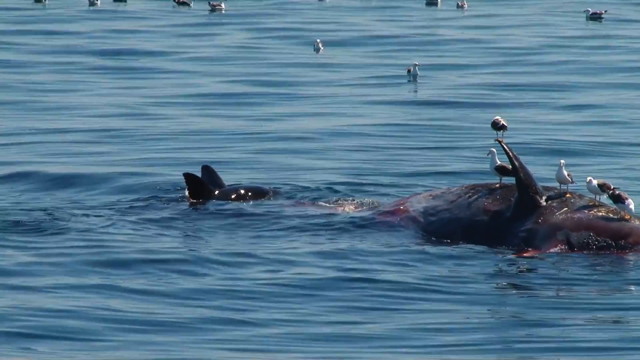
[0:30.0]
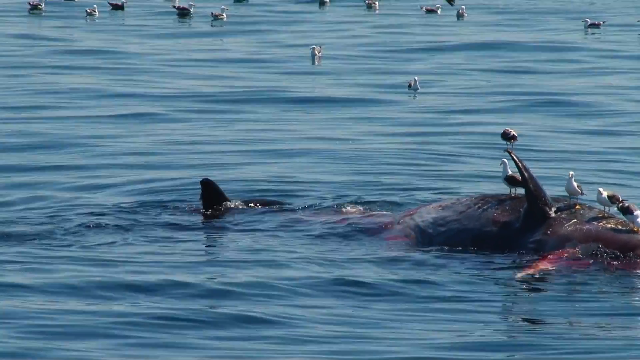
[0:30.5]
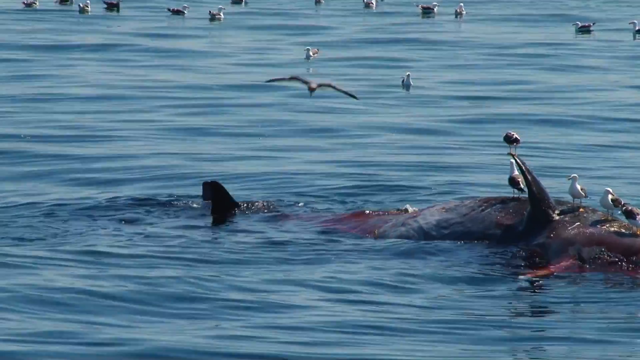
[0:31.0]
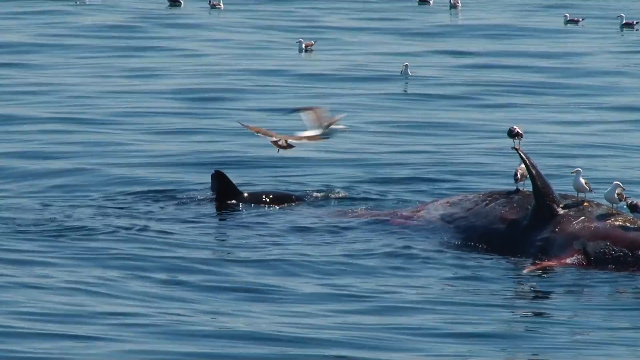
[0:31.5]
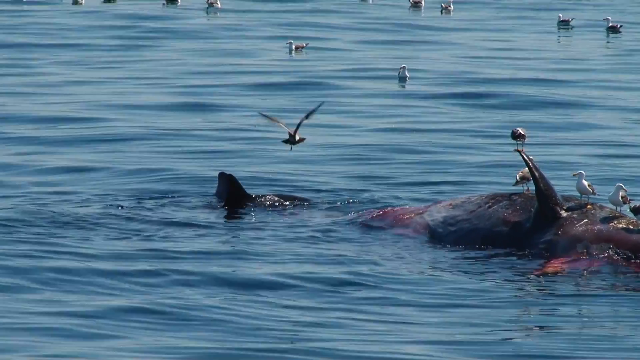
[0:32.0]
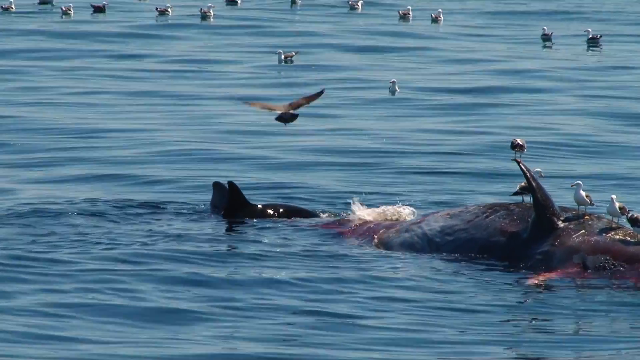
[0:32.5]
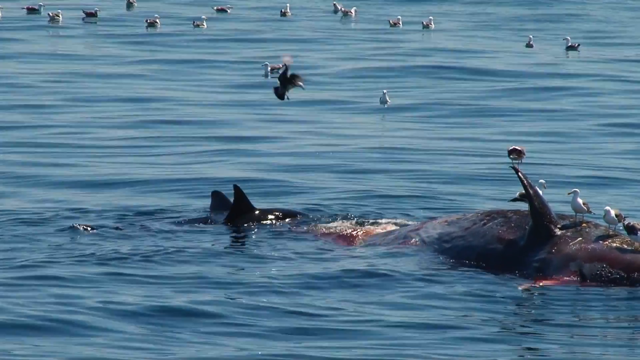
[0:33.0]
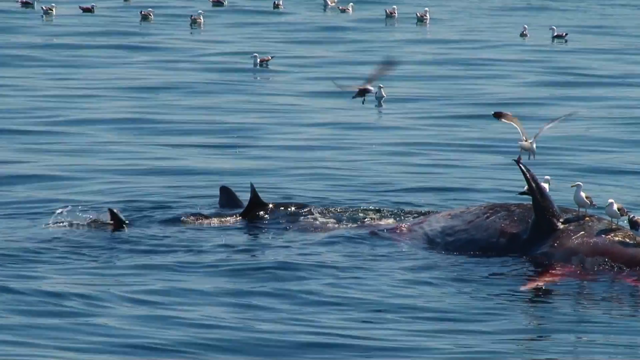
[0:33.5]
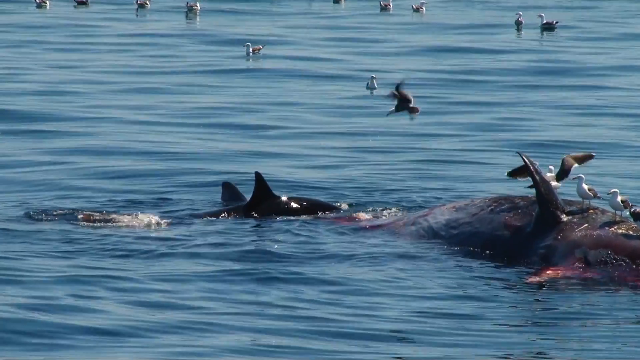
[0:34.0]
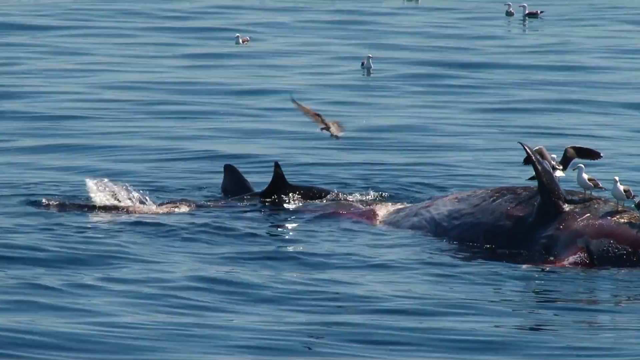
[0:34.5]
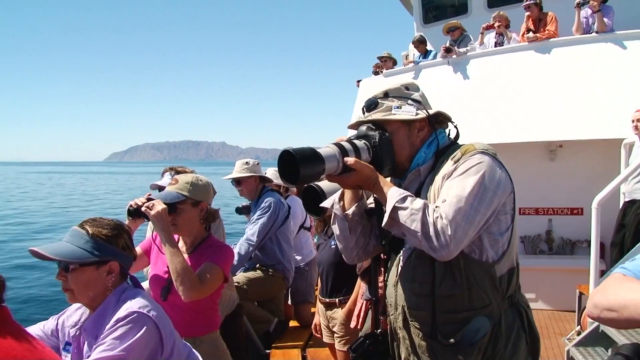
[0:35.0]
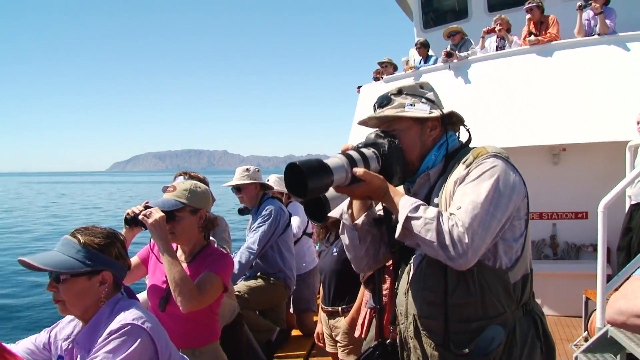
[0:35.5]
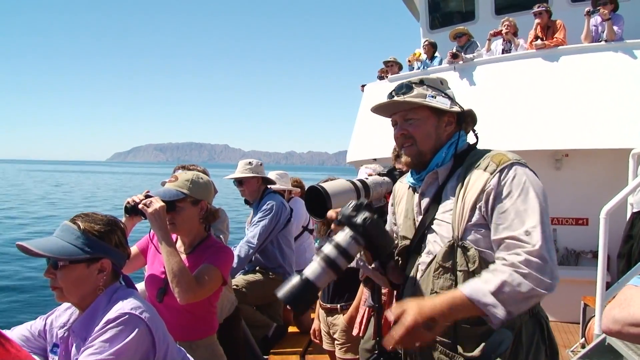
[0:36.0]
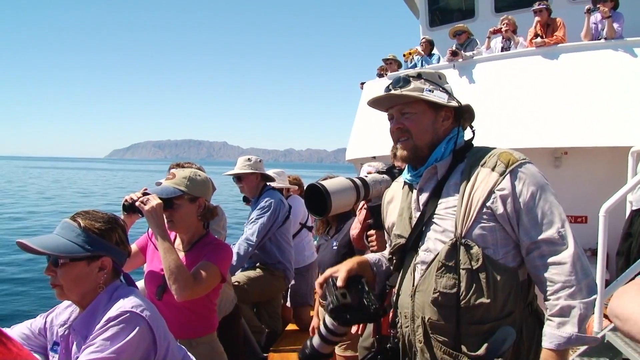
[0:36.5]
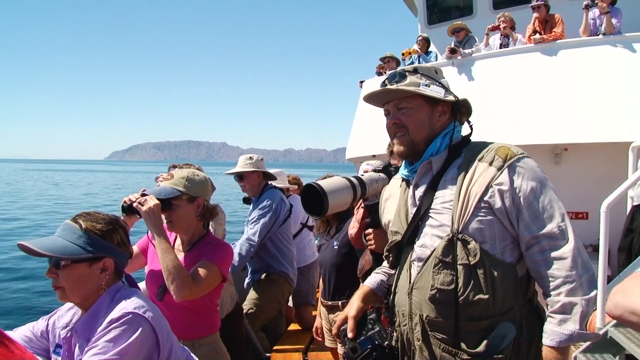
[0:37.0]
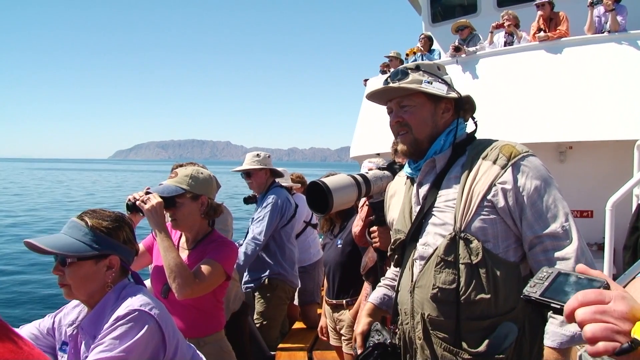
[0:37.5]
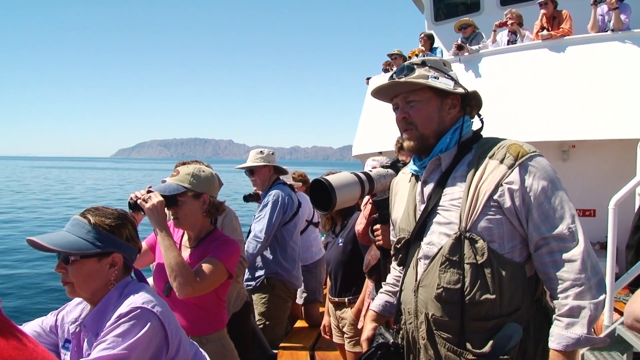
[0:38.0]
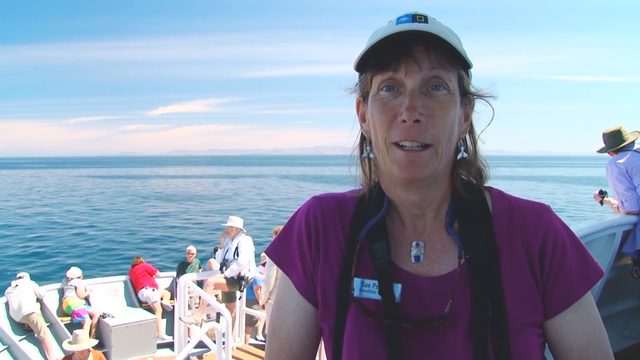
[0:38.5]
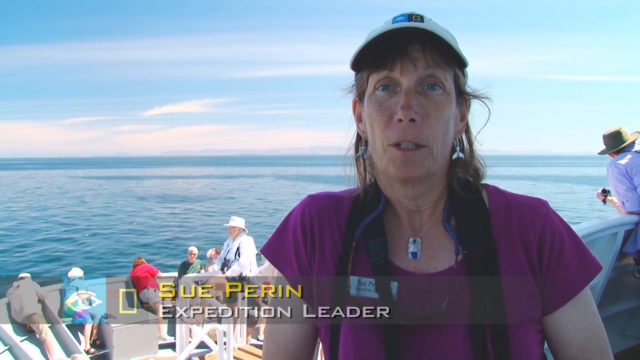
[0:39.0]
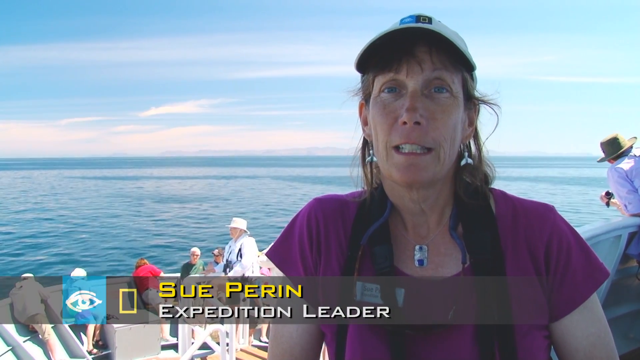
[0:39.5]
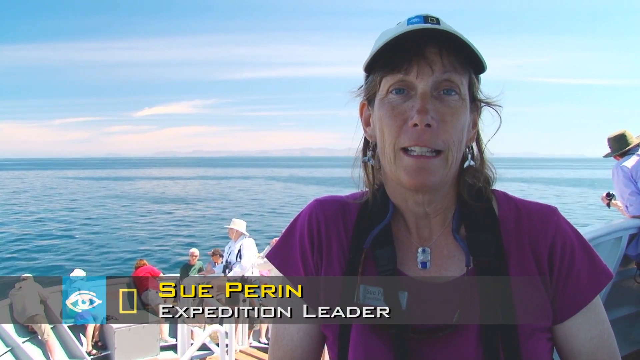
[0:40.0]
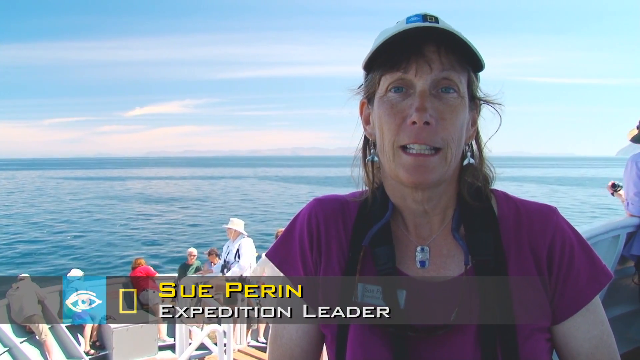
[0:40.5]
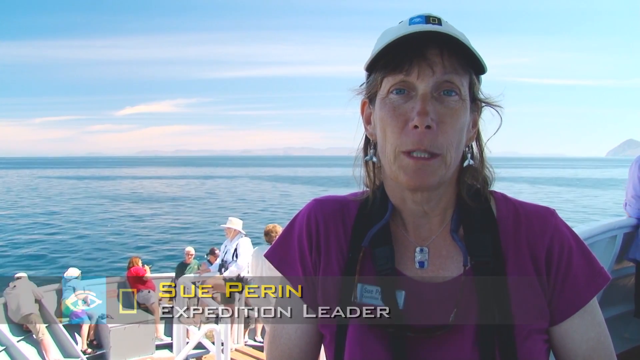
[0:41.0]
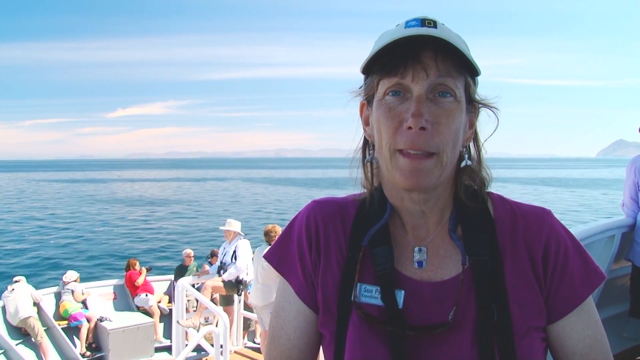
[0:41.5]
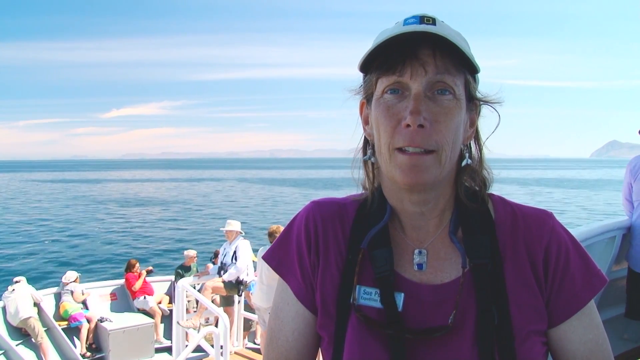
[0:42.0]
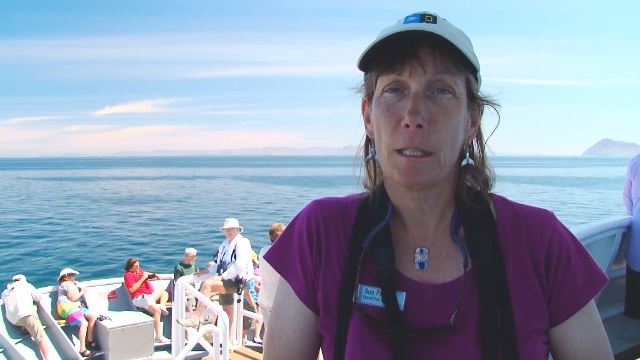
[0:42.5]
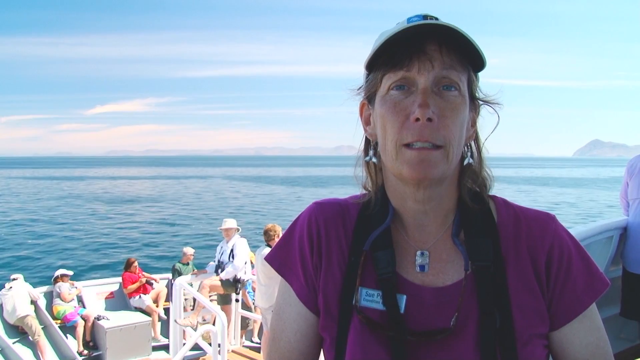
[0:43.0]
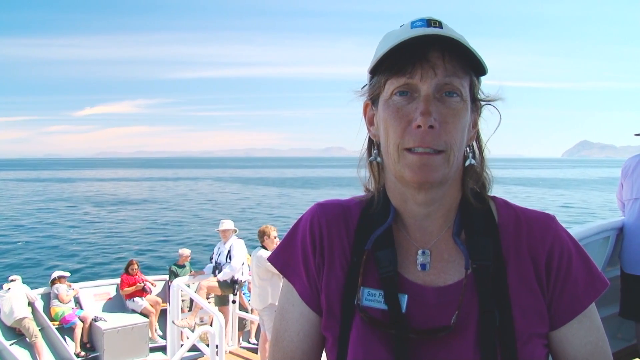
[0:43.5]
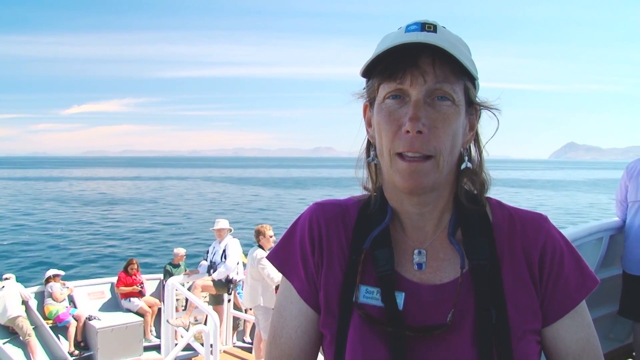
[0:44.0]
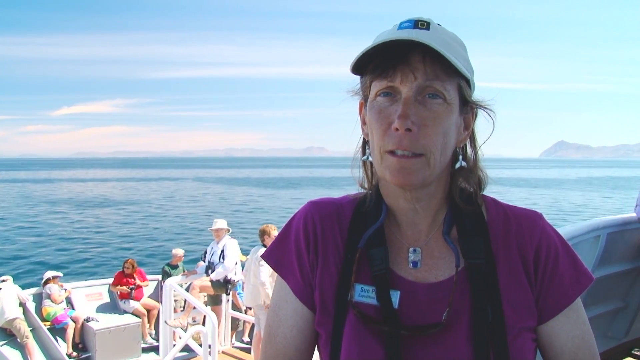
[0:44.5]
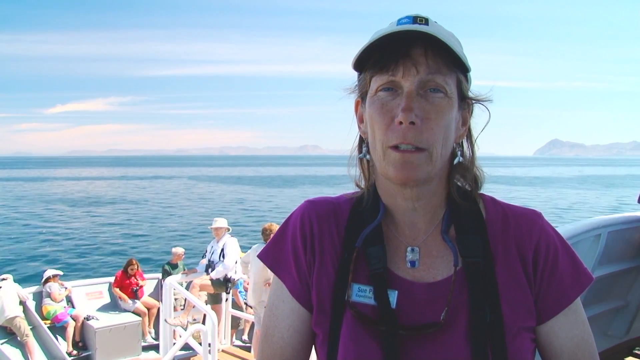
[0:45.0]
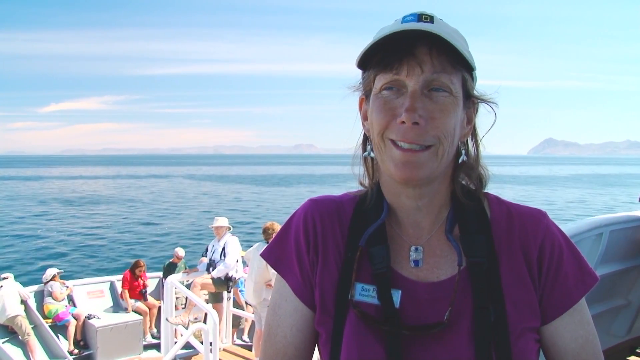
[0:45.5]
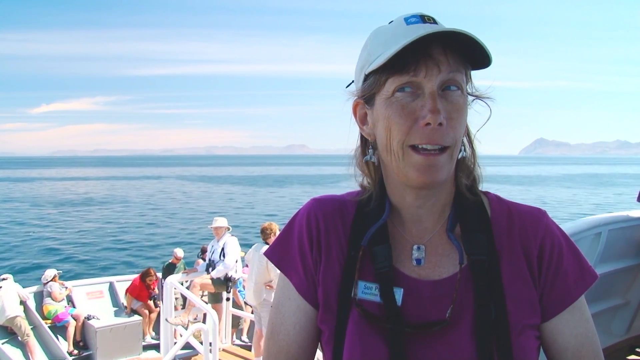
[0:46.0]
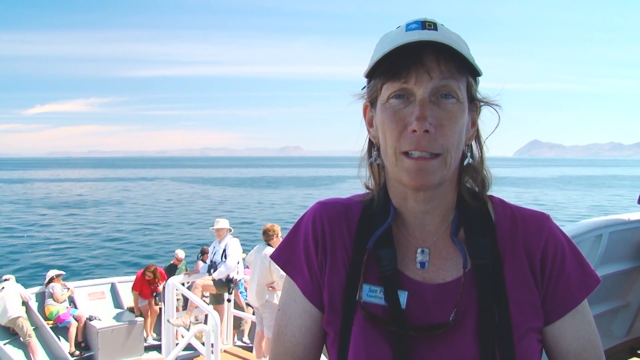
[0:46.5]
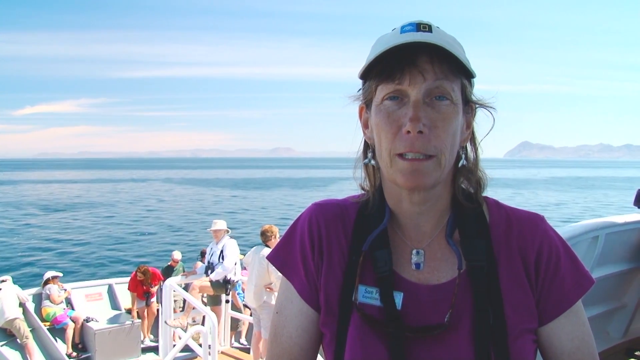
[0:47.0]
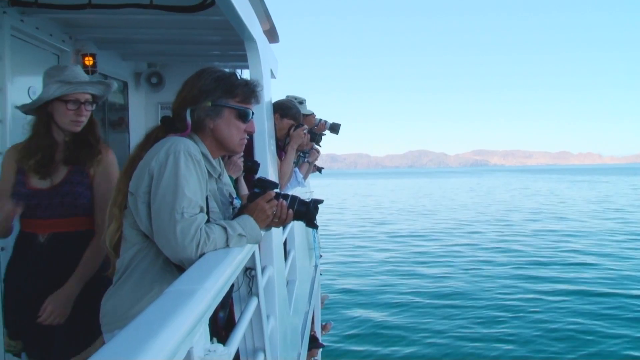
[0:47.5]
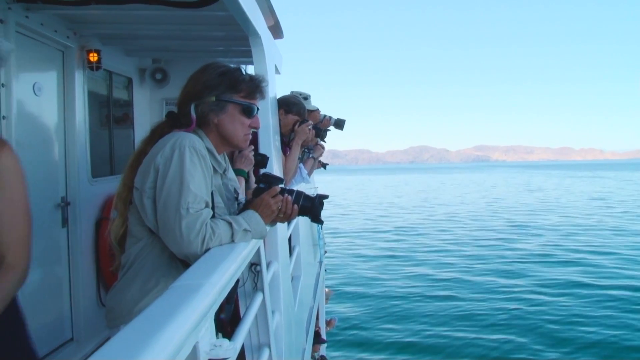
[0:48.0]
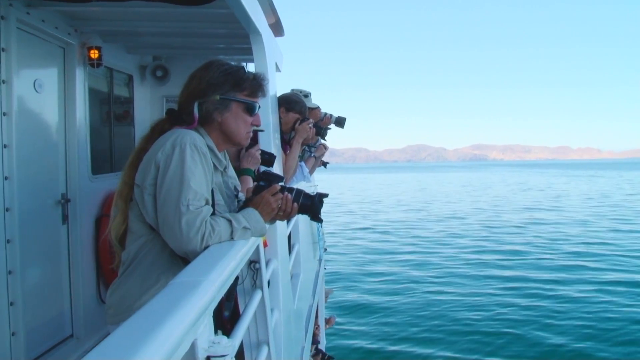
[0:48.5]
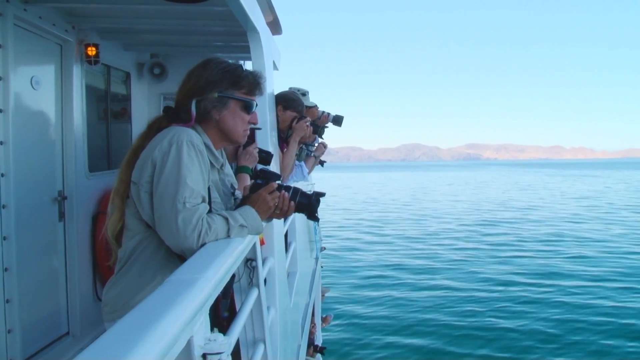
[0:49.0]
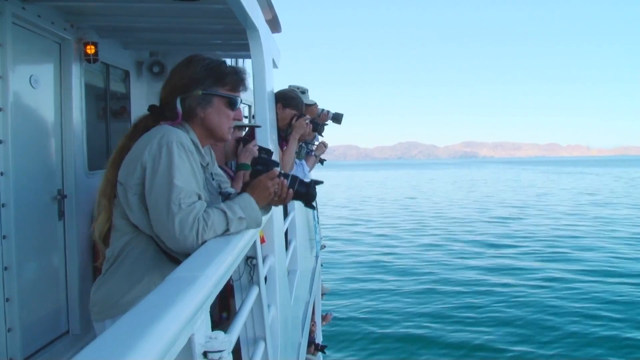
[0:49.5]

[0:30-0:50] The view moves over to the ship, where a man is visibly upset as he takes his camera away from his face and says something. Next comes the expedition director, Sue Perrin. She wears a fuchsia-colored T-shirt, dangling earrings that might be dolphins, a necklace, and a white baseball cap. She looks to be in her late 50s to early 60s and looks very serious. Behind her, people sit on a small bench inside the ship holding cameras with long lenses; they all wear shorts and hats, suggesting a warm month. Most of them look to be in their late 50s to early 70s, and most are female. Birds still seem to be all over the whale, with more birds coming in from the water and gathering around it. The whale is apparently dead. Several dolphins or something with fins are also gathering around it.